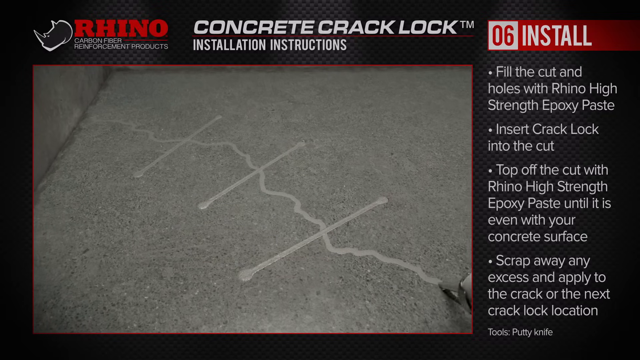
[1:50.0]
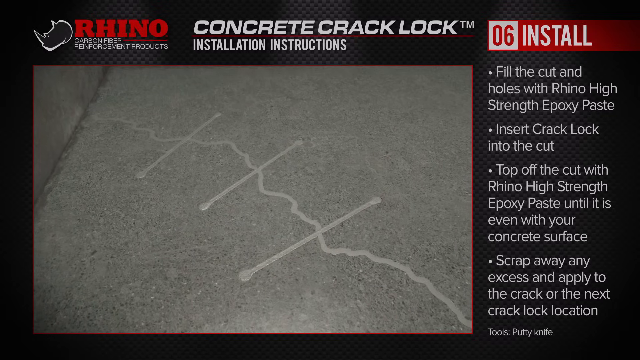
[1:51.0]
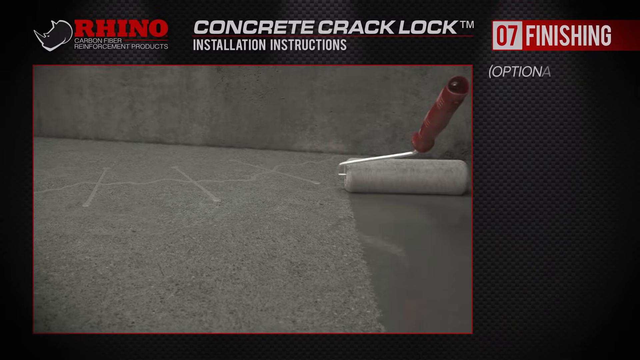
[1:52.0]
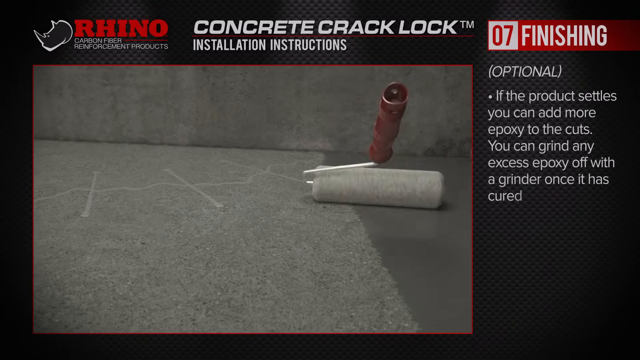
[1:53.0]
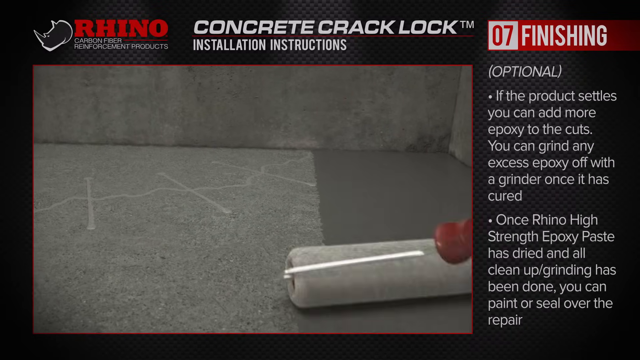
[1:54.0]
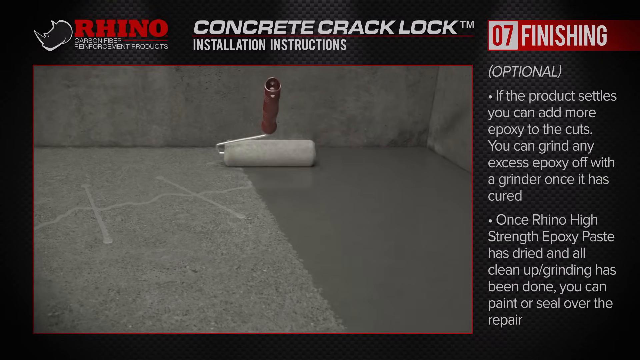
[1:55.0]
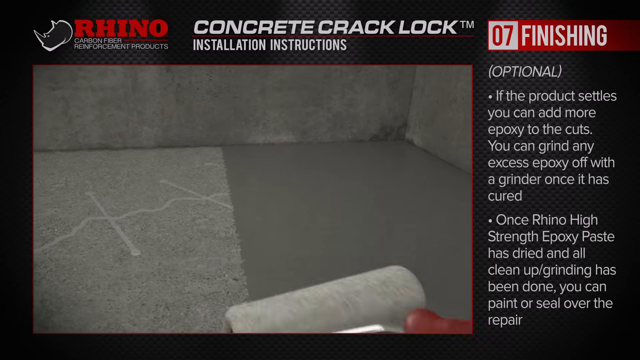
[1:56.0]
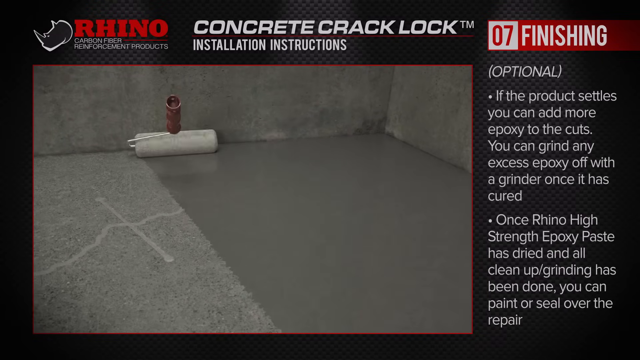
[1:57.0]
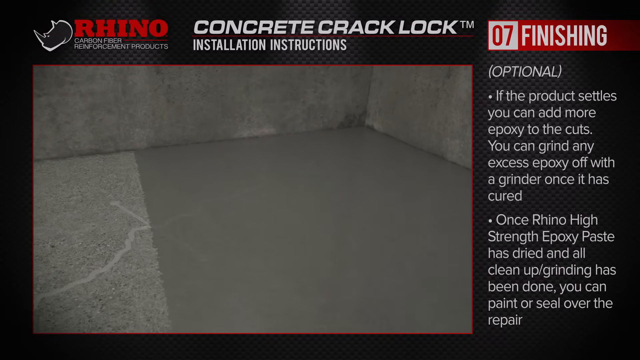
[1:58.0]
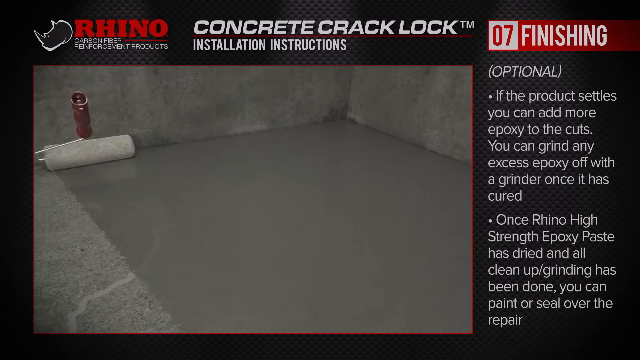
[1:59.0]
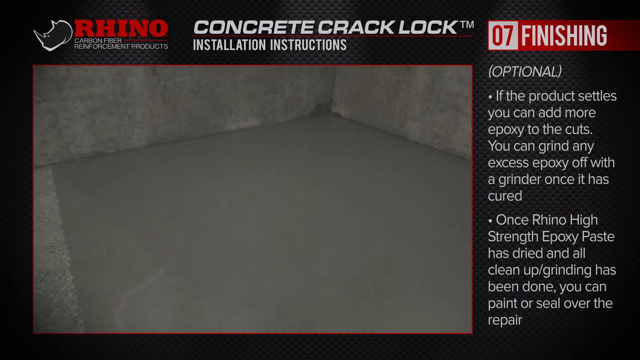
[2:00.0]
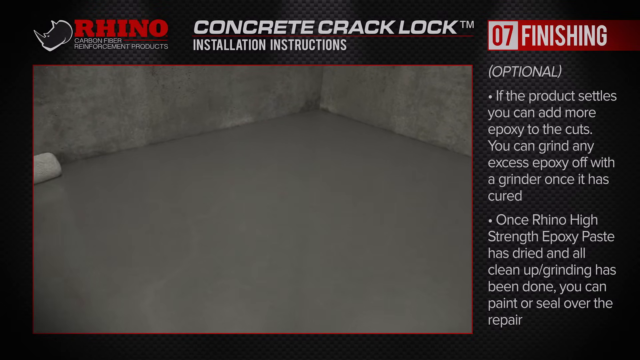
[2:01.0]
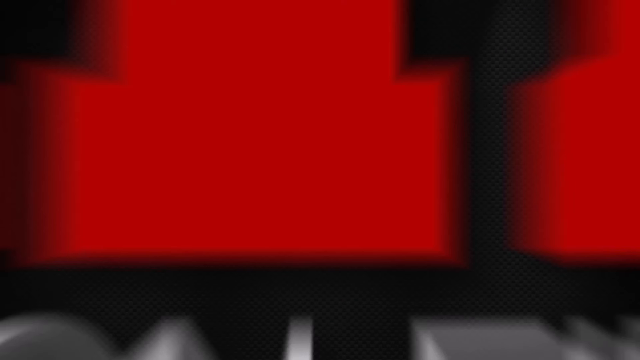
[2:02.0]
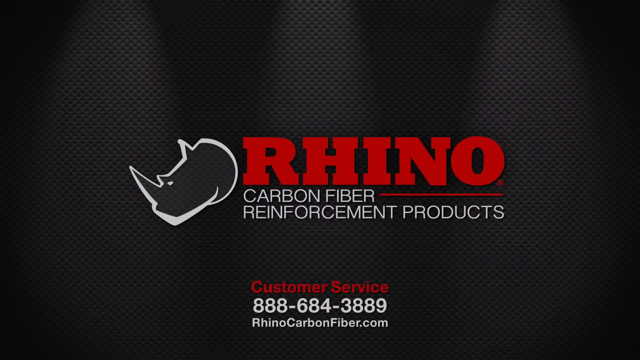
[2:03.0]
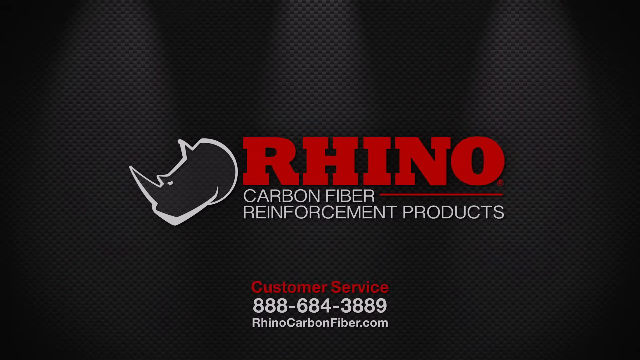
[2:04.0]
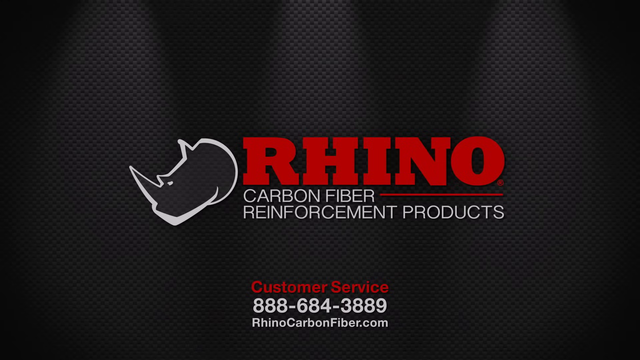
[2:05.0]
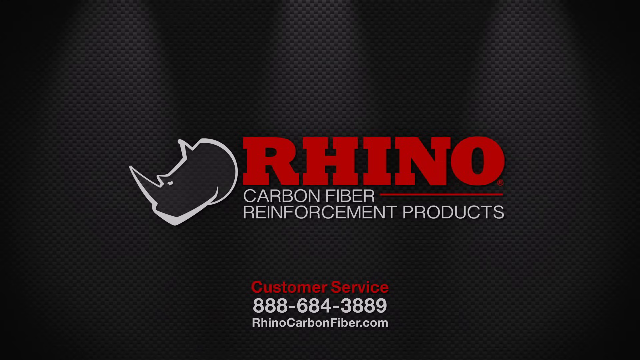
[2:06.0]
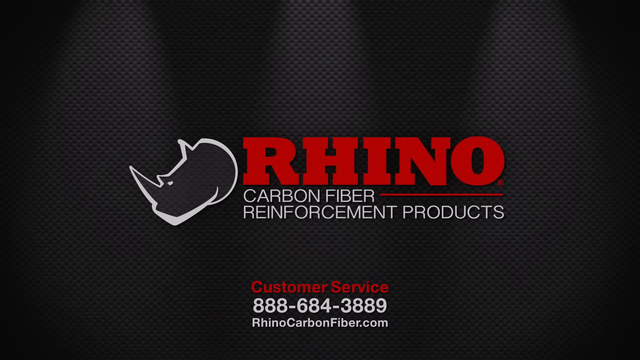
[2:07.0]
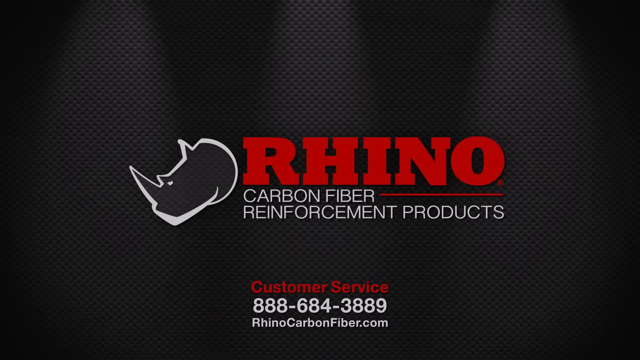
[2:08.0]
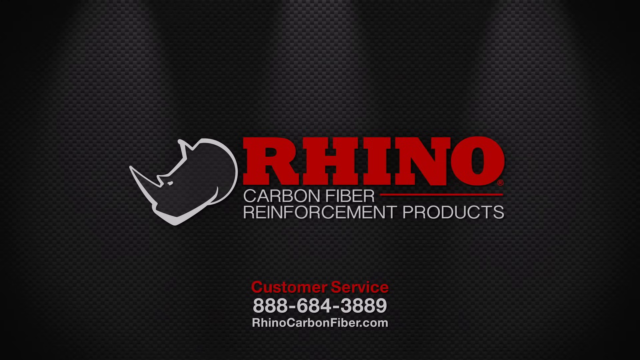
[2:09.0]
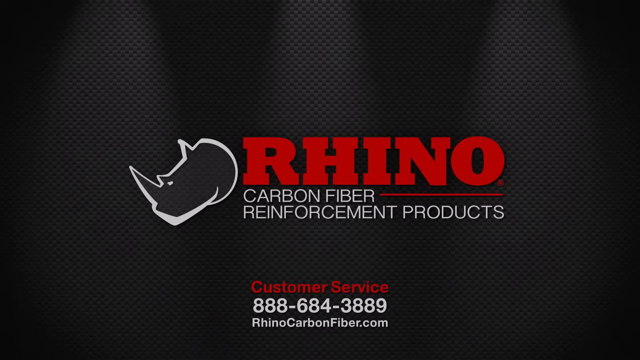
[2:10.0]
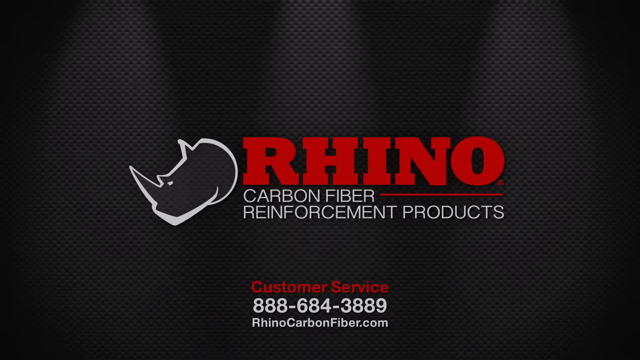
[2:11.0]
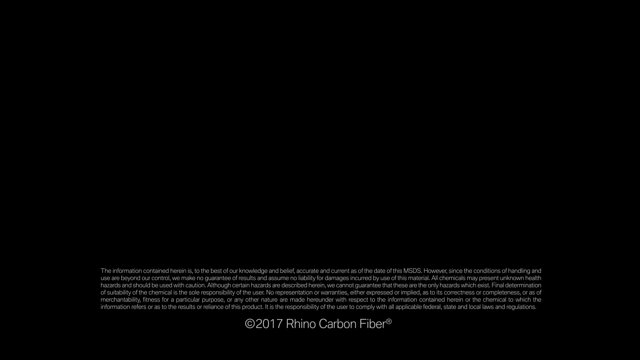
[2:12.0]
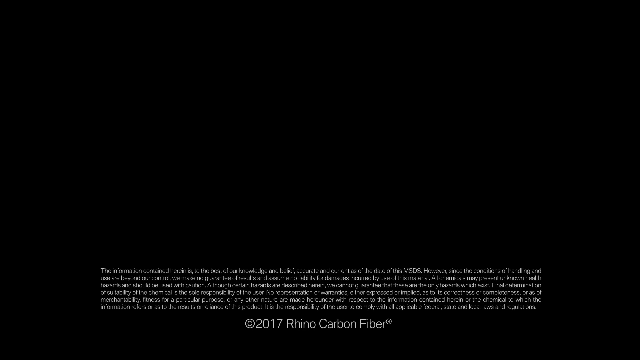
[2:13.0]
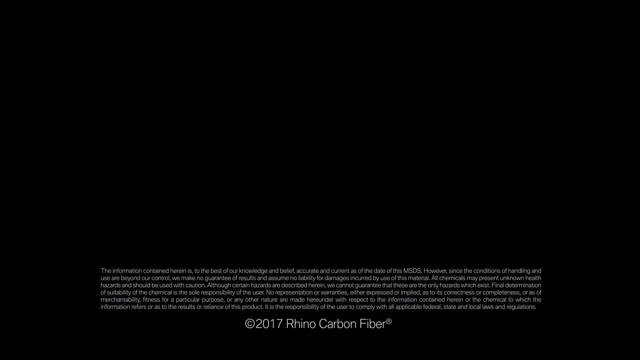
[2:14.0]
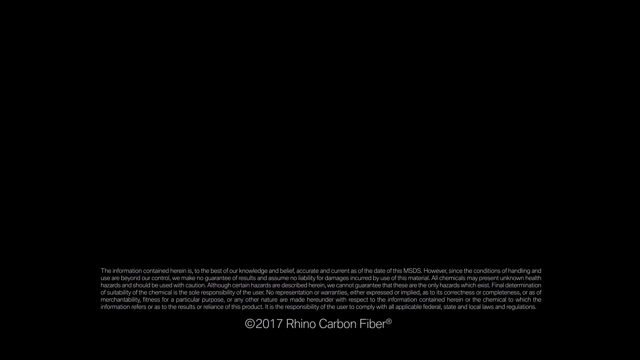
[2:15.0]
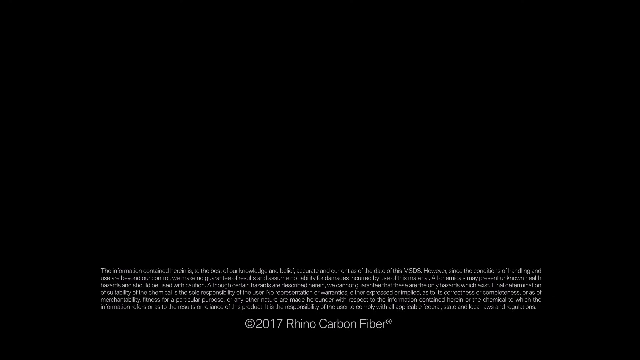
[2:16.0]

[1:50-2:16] A ruler is being used, and the Rhino Carbon Fiber Reinforcement product logo remains in the top-left corner, with information stating that this is a concrete crack log trademark installation instruction. Step number seven, finishing, is shown: the number seven is in red on a white background, while "finishing" is written in white on a red background. The finishing is optional. The text says that if the product settles, more epoxy can be added to the cuts, any excess epoxy can be ground off with a grinder once it is secured, and once the Rhino High Strength epoxy paste is dried, cleaned up and ground, the repair can be painted or sealed. This is demonstrated as a ruler is introduced and seals off the floor: as the ruler is used, the silver-white floor is rolled and painted and turns gray and smoother. The rolling bottom of the ruler is white. The rugged, jagged silver floor and its crack are covered, and the floor now looks smoother and gray. The video fades to the Rhino Carbon Fiber Reinforcement products logo alongside the customer service number 888-684-3889 and the website Rhinocarbonfiber.com.